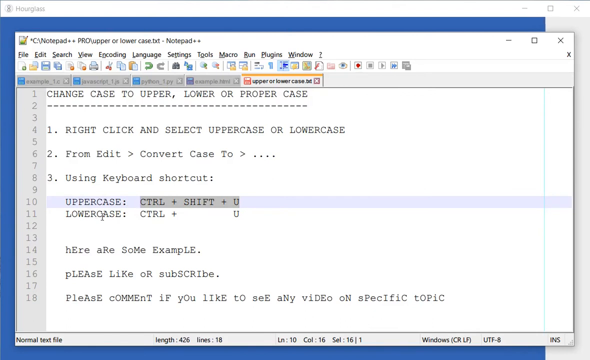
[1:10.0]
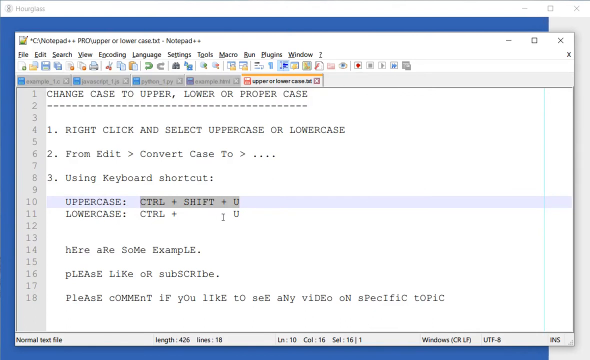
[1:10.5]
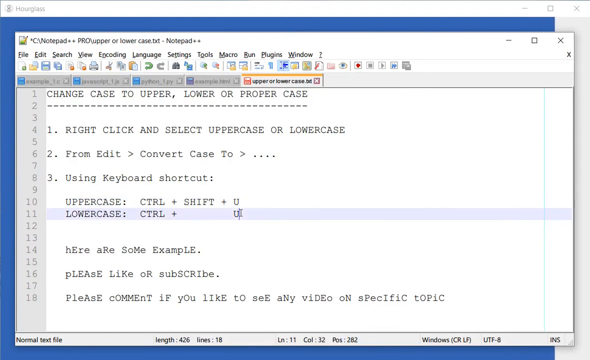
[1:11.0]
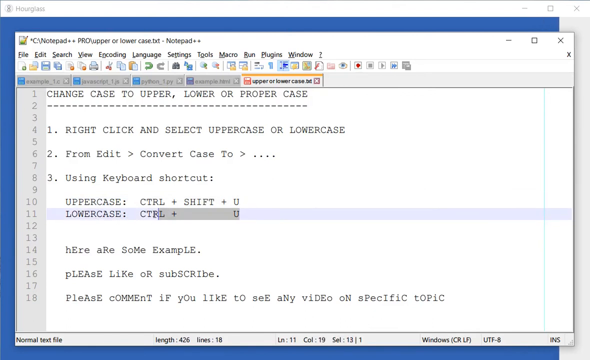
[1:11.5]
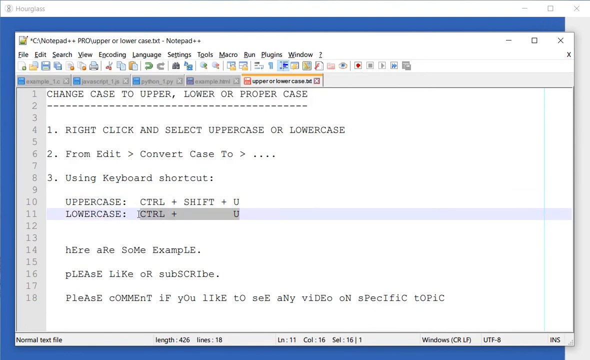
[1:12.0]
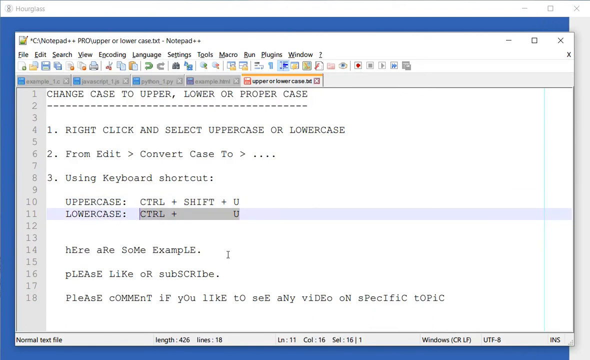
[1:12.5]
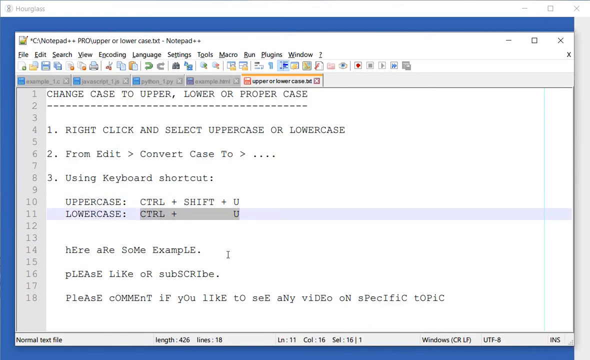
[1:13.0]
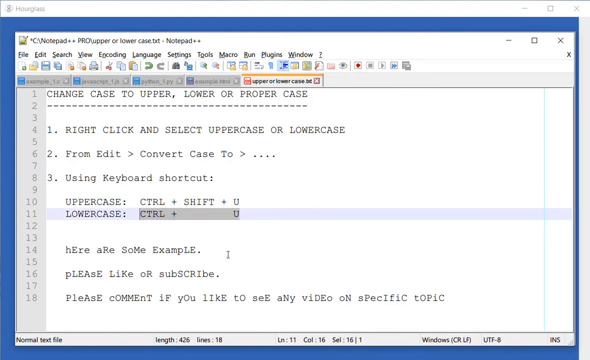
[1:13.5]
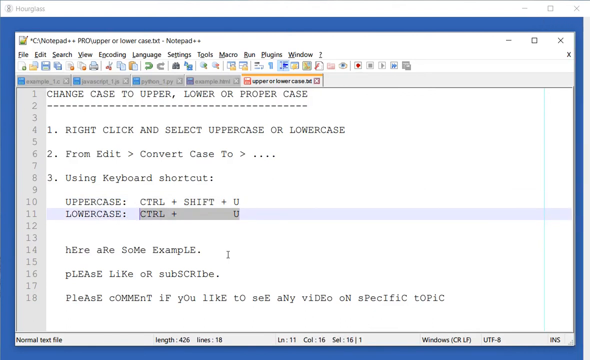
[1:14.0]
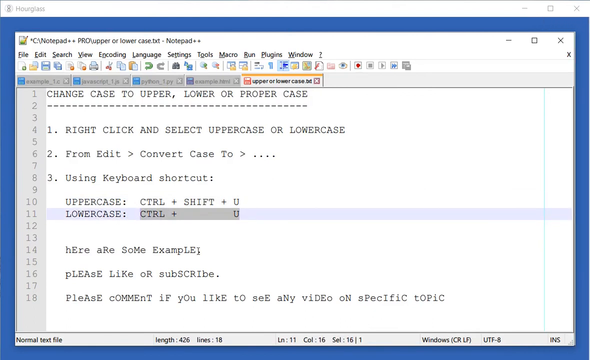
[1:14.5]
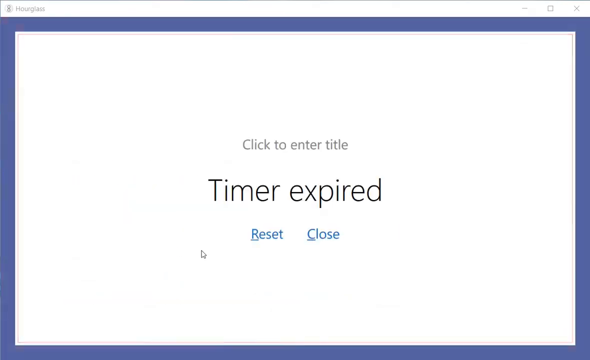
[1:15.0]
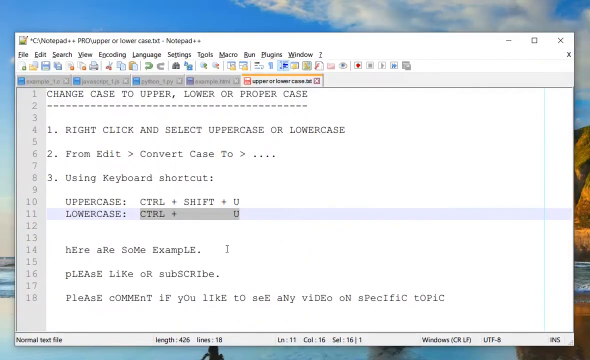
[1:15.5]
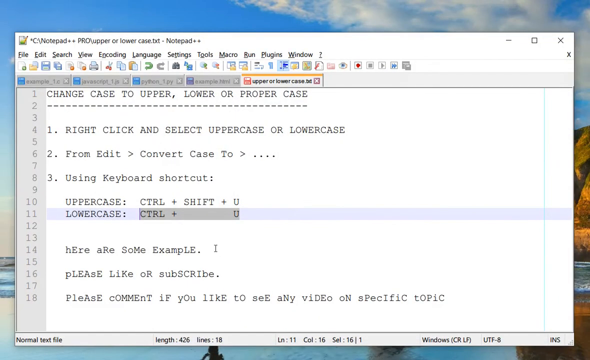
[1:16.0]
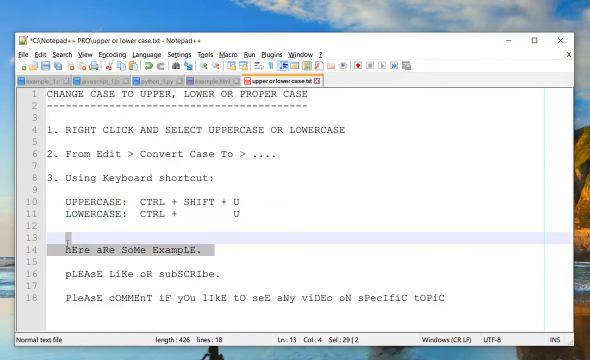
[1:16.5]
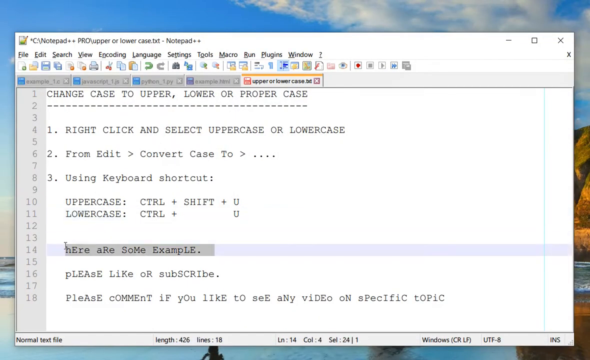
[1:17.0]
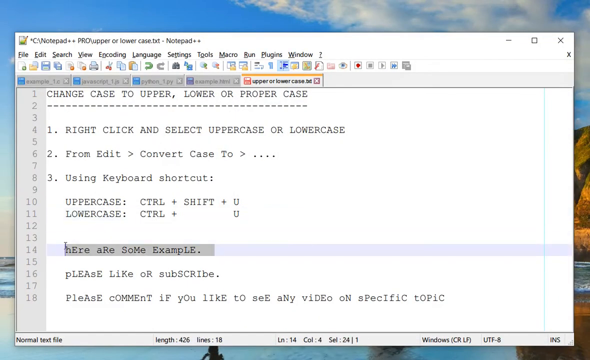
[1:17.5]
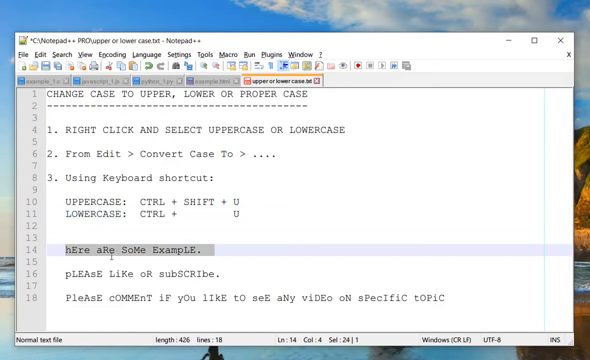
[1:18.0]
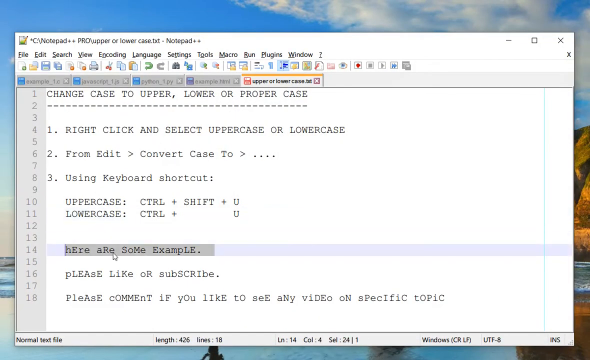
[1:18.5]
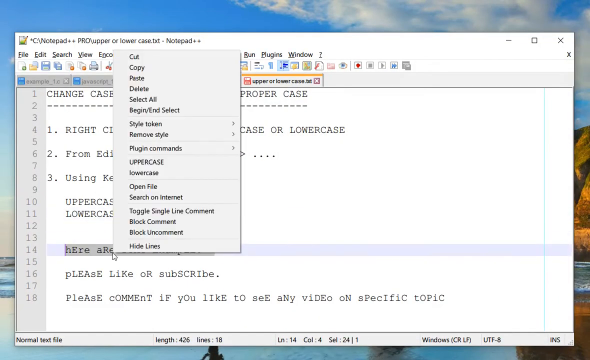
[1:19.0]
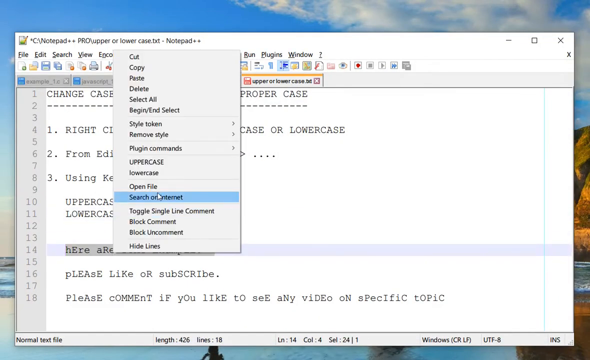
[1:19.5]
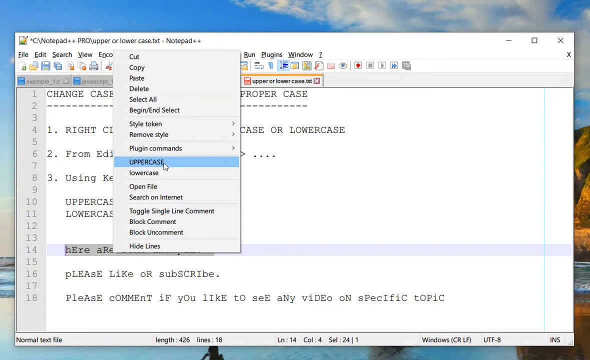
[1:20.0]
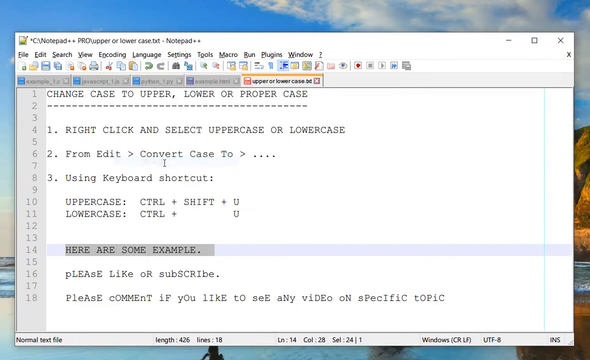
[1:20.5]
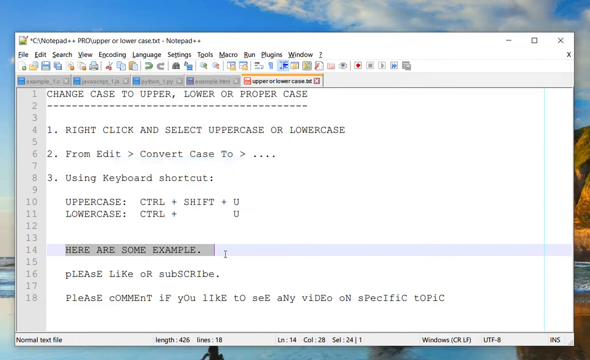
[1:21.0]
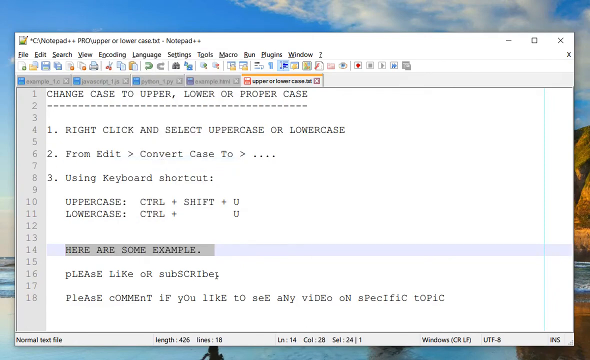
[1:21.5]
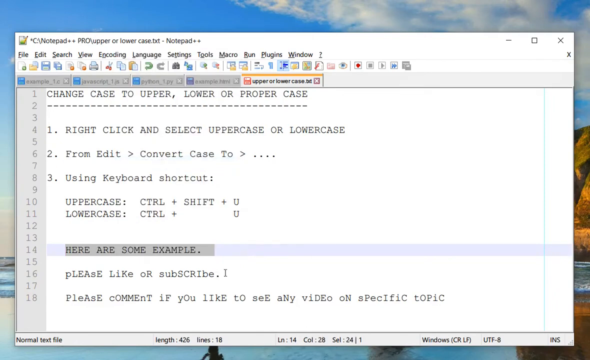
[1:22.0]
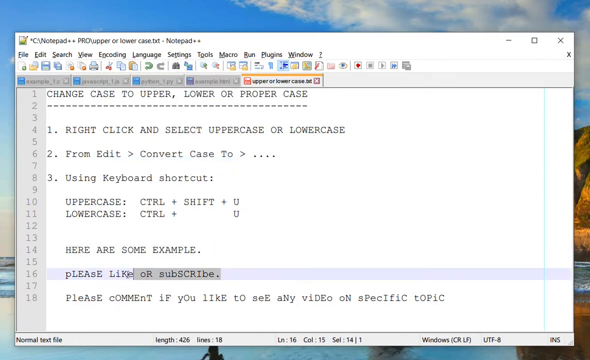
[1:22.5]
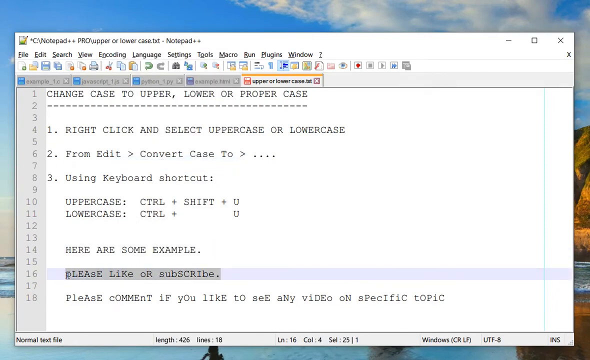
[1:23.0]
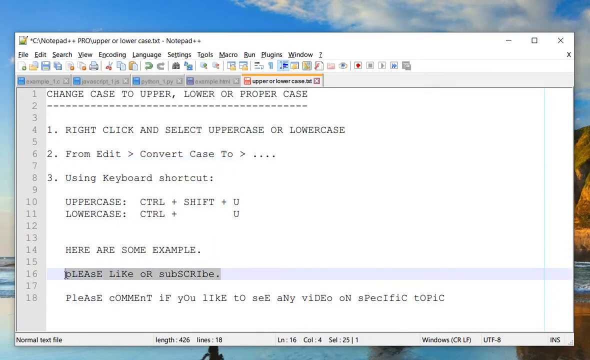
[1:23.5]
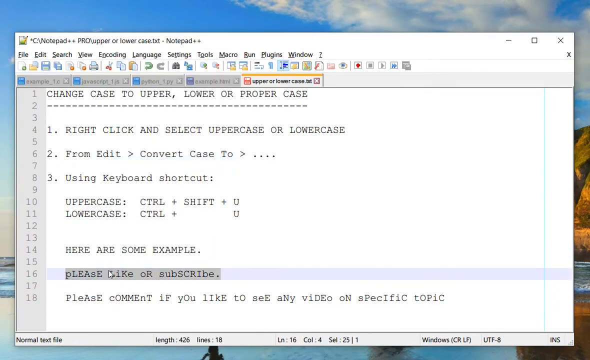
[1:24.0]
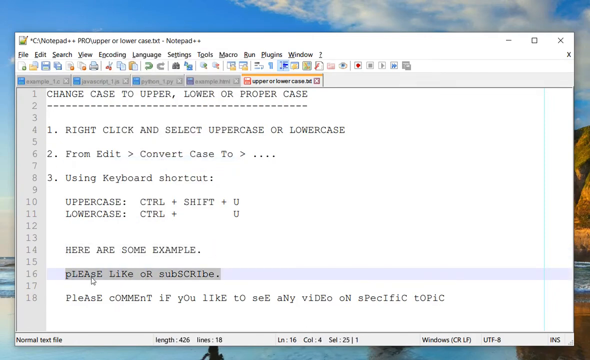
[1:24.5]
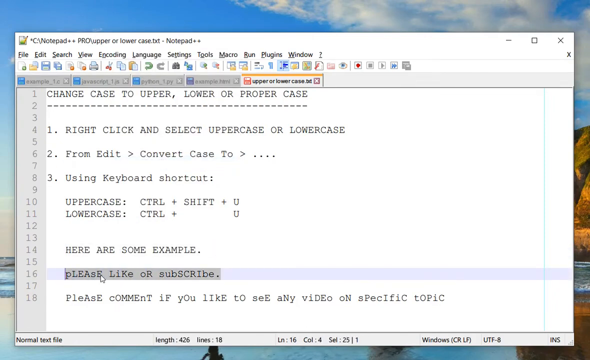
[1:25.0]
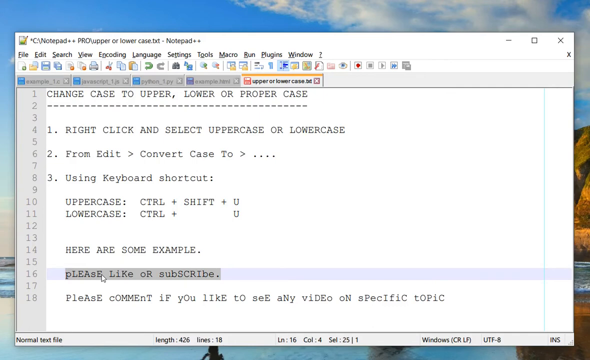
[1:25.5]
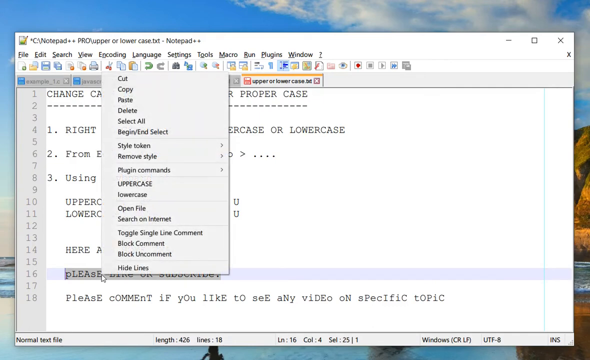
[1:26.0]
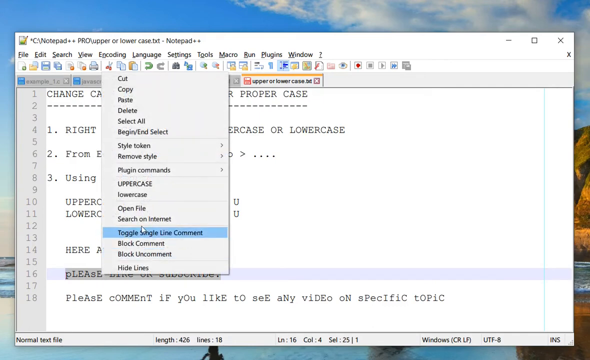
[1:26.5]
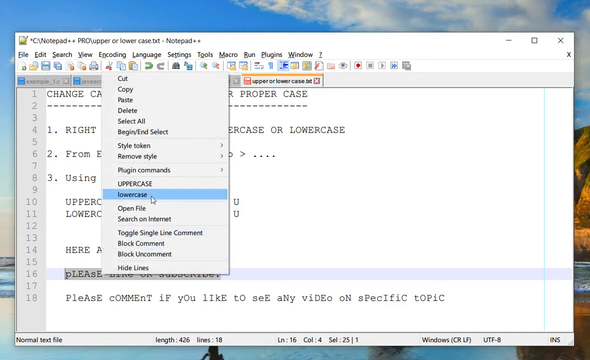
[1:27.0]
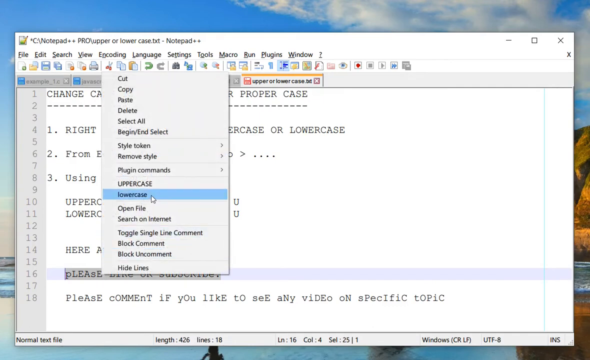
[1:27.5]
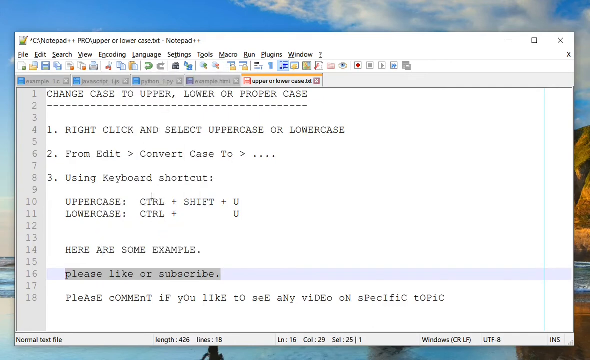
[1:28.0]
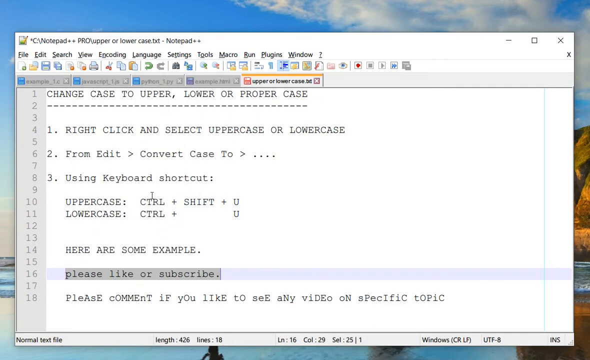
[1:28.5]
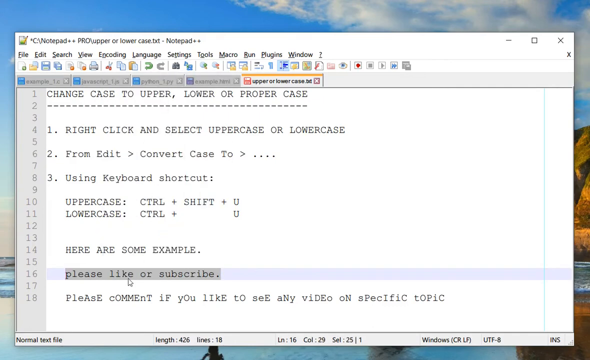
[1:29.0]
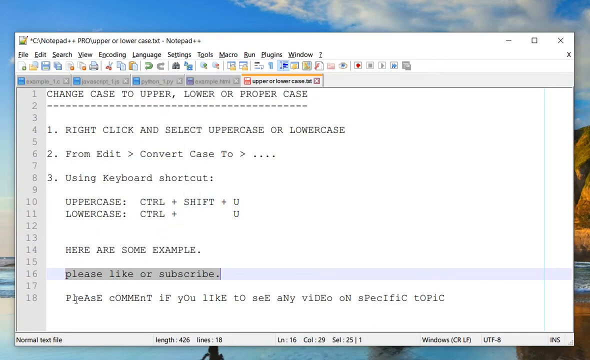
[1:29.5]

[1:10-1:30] The user continues showing the keyboard shortcuts in Notepad++. There is a brief pause because the one-minute timer set in the background has expired, then the view goes immediately back to the text file. The lowercase shortcut is highlighted. The user drops down to the first example, "here are some example", highlights it, right-clicks, and changes it to uppercase. Next, the second sentence, "please like or subscribe", is right-clicked and changed to lowercase. The user then goes back to the section where "control plus shift plus U" is highlighted.